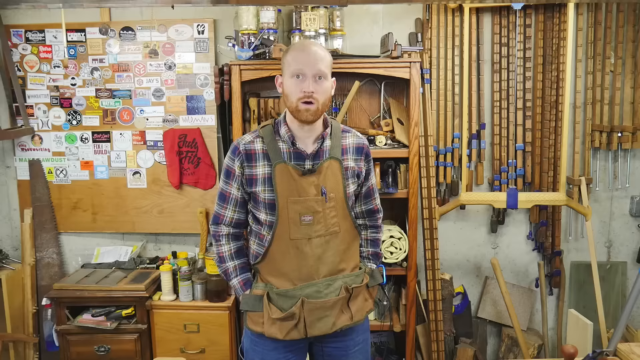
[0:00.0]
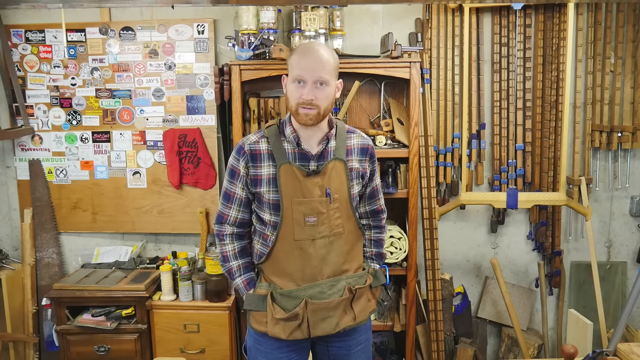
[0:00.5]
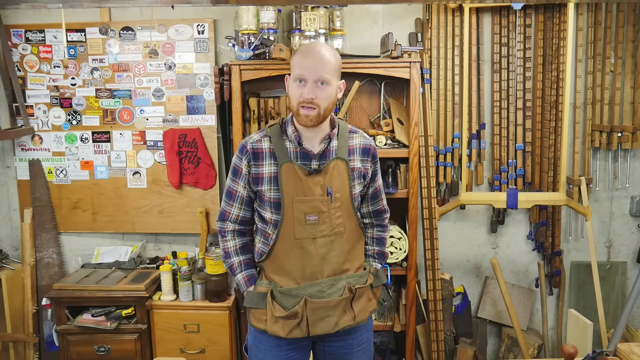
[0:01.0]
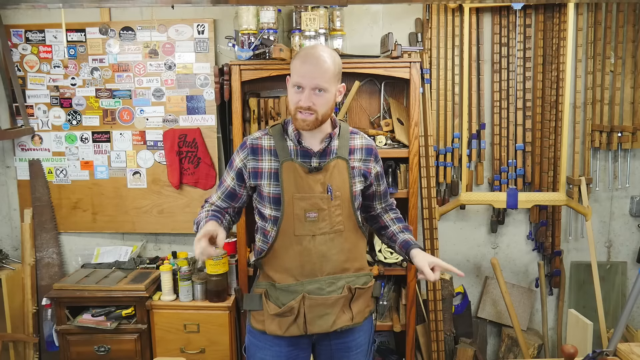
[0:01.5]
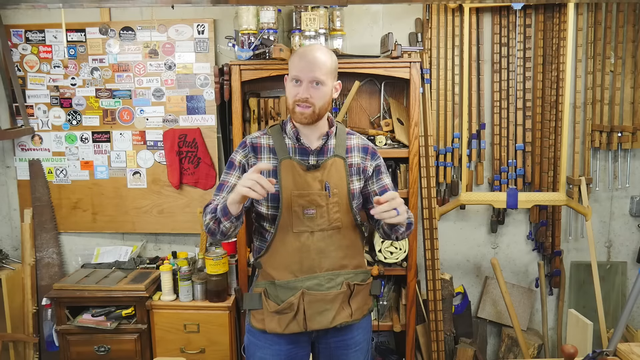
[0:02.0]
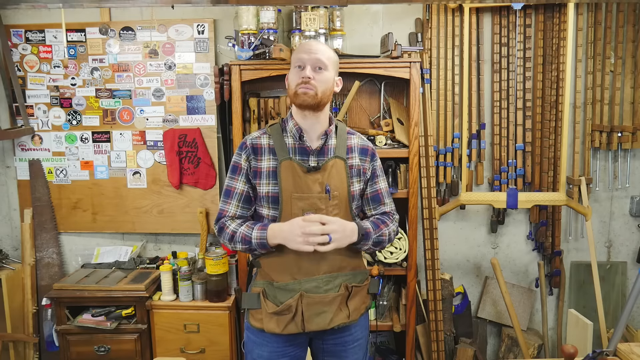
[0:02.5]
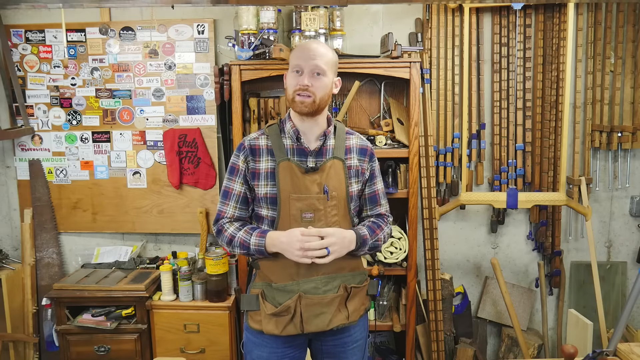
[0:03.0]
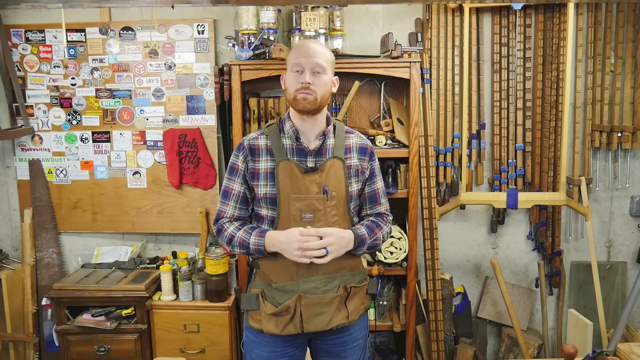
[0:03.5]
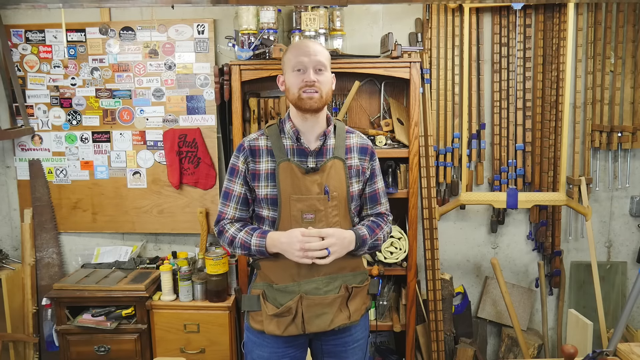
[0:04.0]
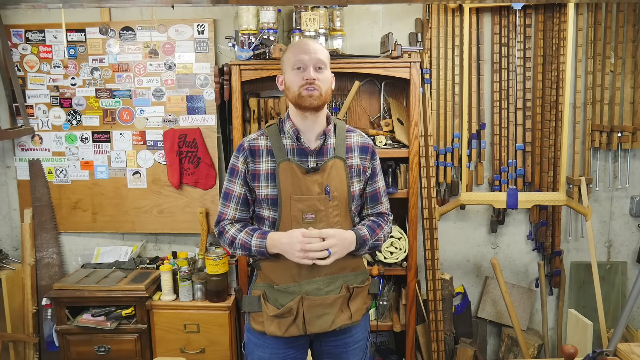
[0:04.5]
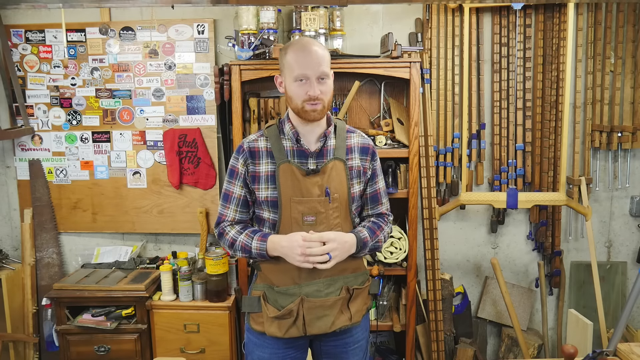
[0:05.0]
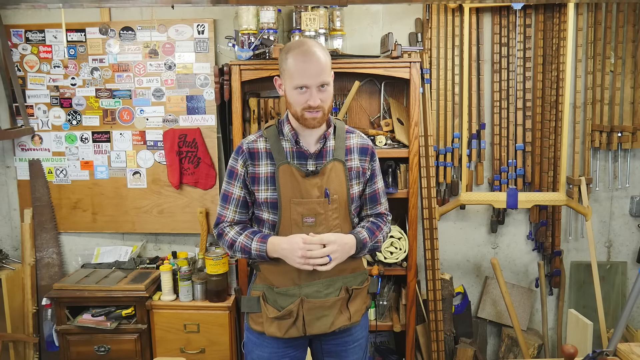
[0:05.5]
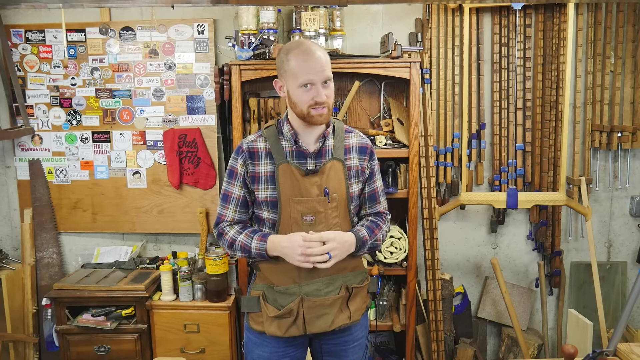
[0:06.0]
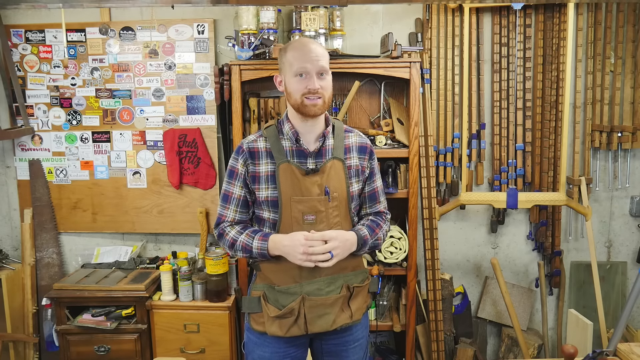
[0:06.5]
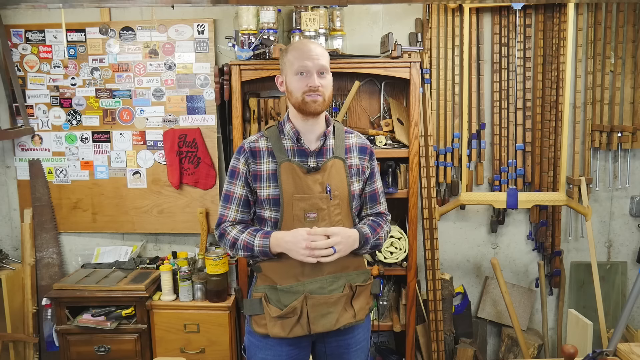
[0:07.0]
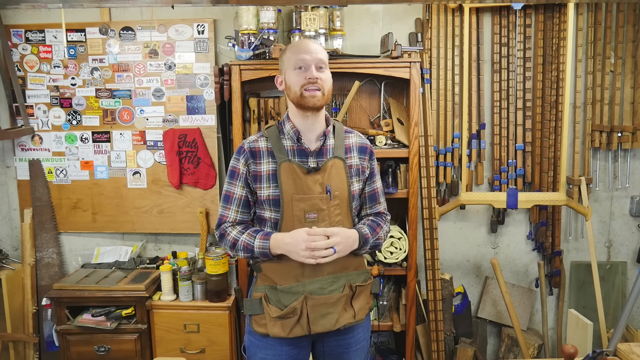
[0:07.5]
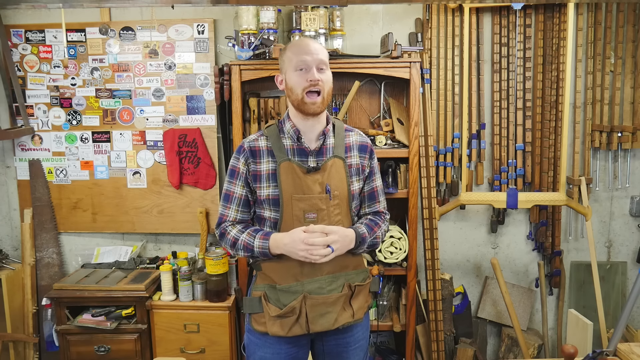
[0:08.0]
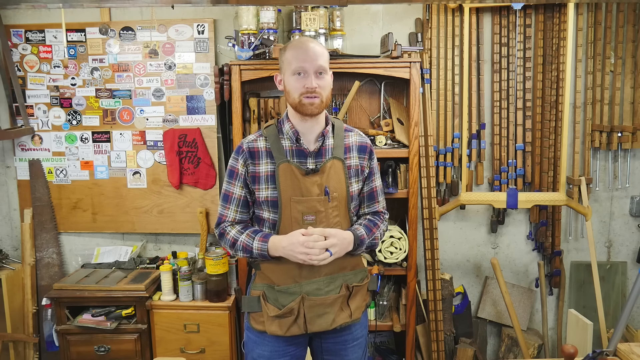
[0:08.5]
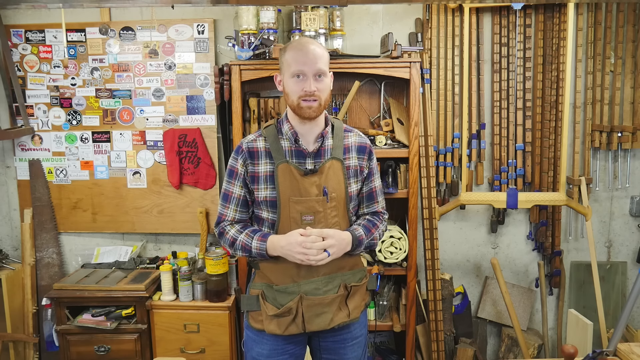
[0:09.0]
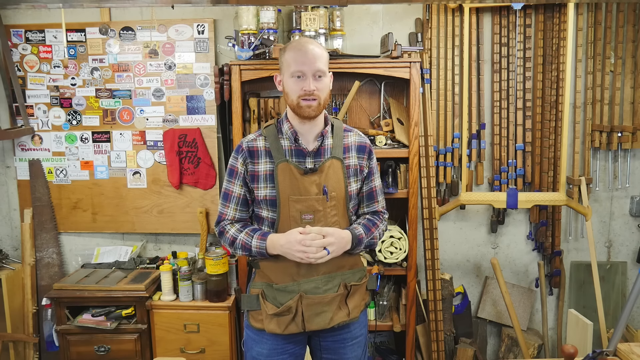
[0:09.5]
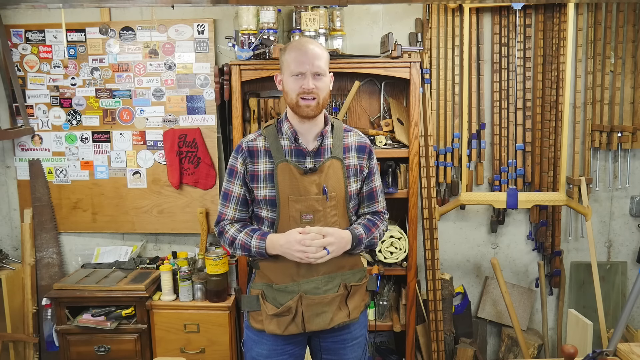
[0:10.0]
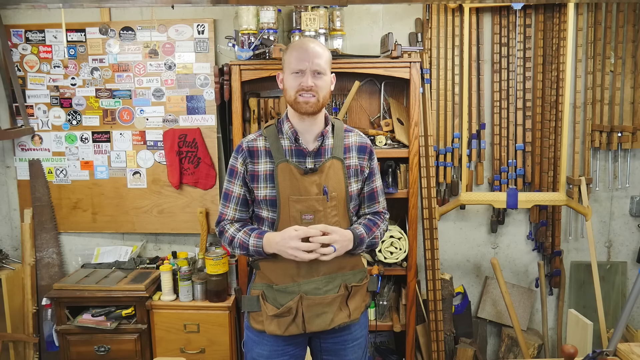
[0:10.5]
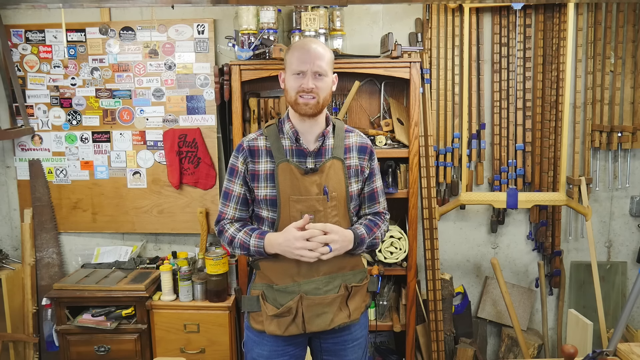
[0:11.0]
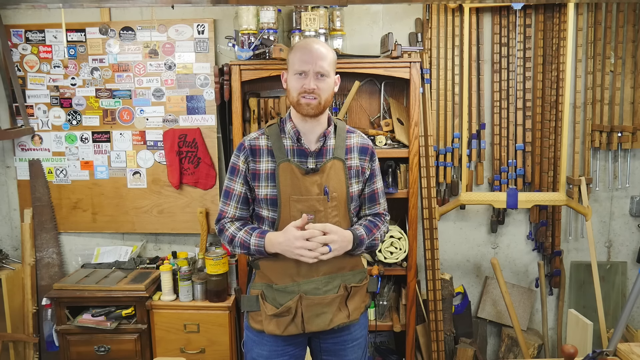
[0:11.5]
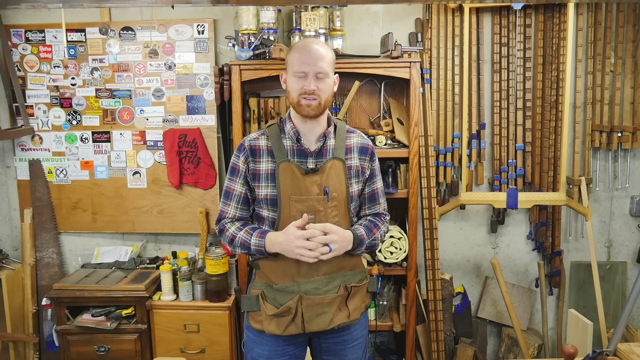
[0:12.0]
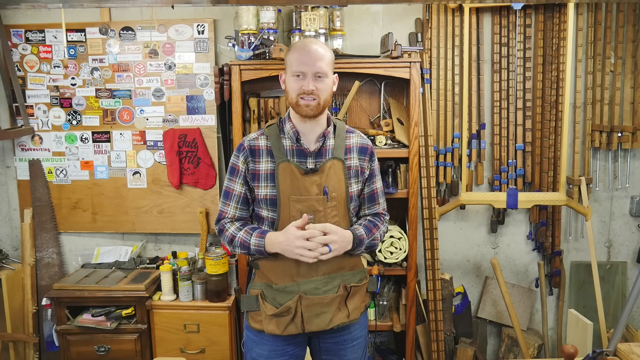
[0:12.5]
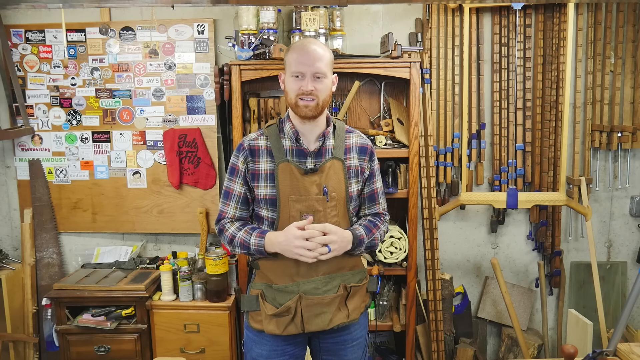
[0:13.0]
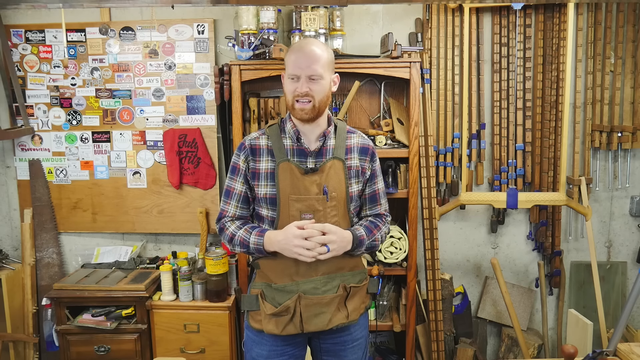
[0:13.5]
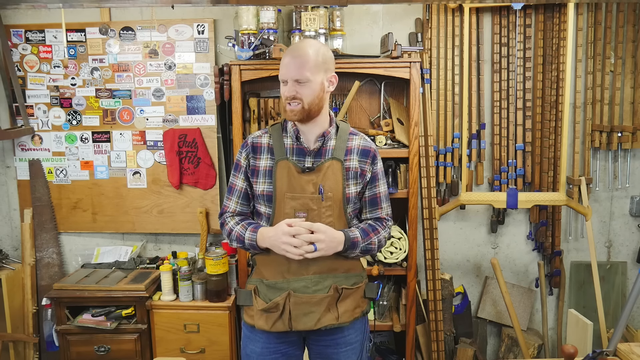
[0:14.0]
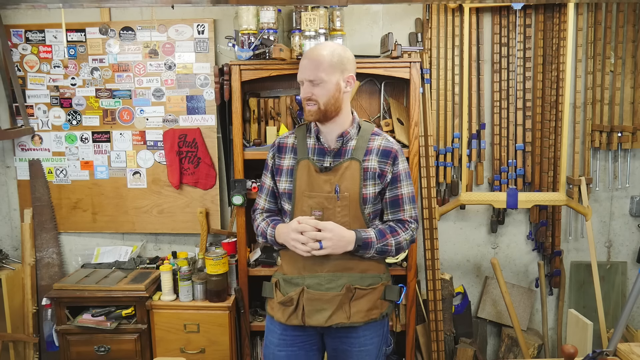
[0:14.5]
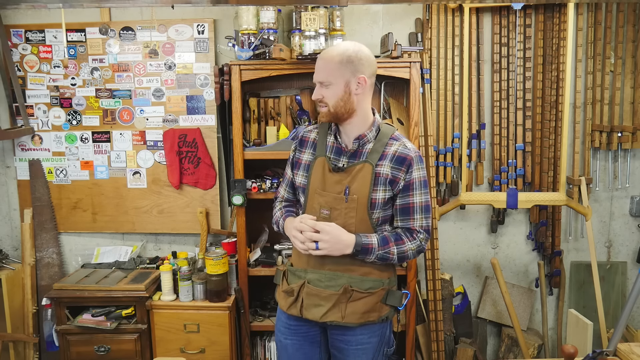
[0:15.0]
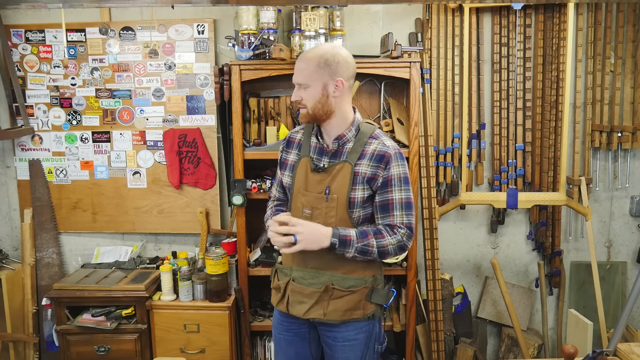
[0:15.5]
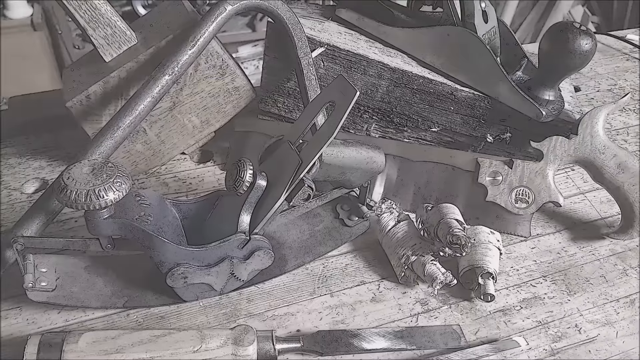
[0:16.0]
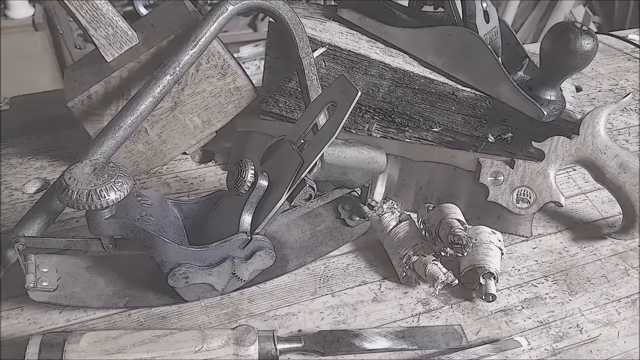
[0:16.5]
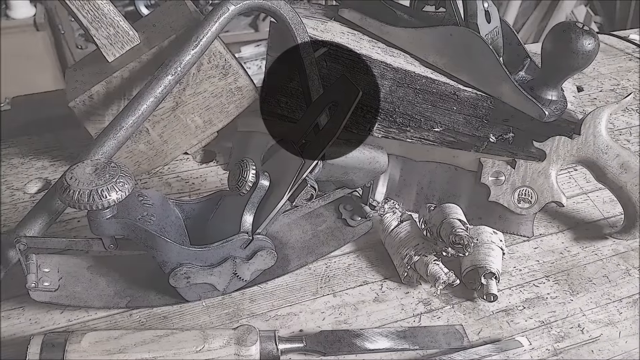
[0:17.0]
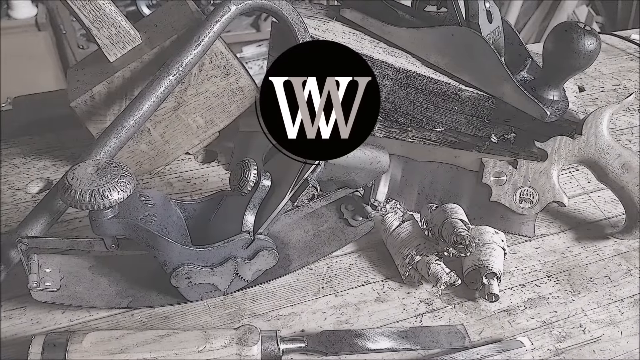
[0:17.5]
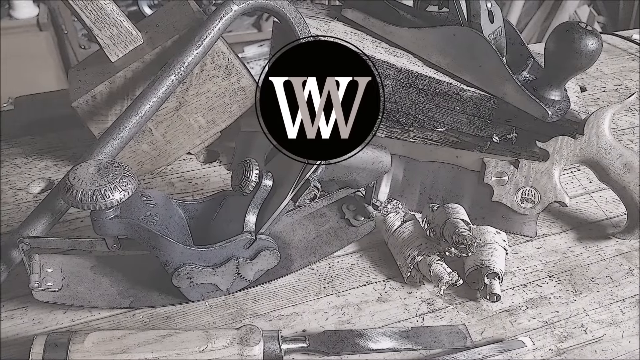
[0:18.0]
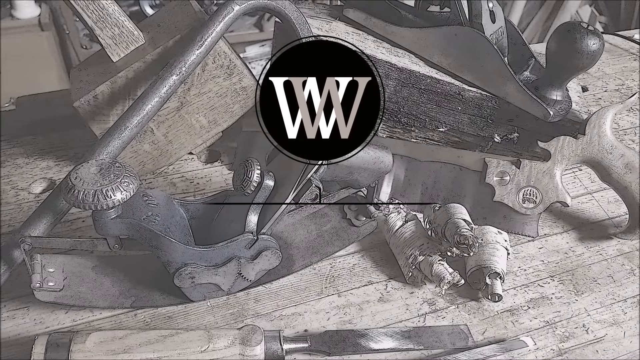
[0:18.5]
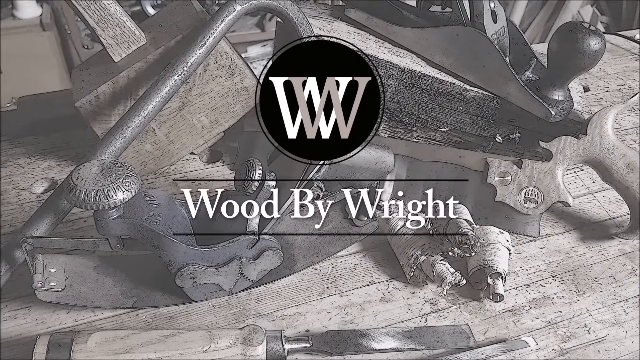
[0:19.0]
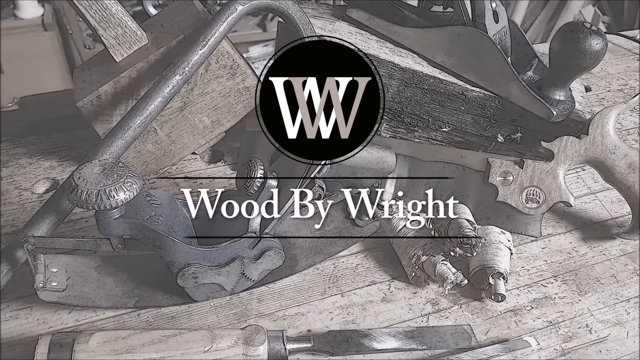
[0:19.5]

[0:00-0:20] A white man stands in the frame wearing his work equipment: a brown work garment and a T-shirt. He is showing some wood and is surrounded by his materials; he apparently works making things out of wood. At the back there is something that shows his work or his planning. He is talking, possibly presenting the company he works for, which is named Wooded by Wright.